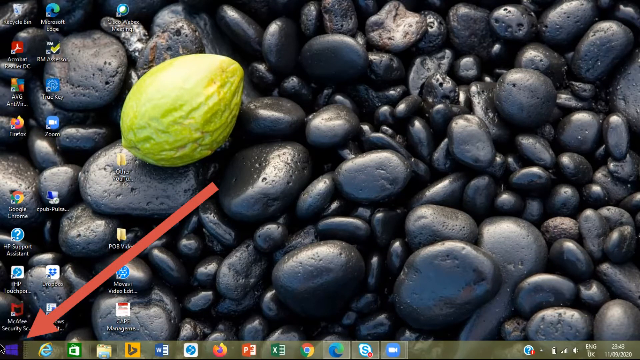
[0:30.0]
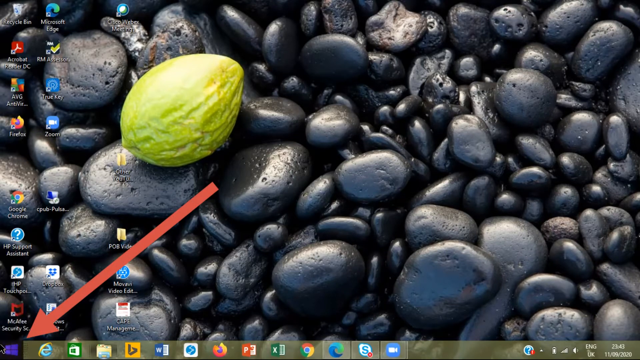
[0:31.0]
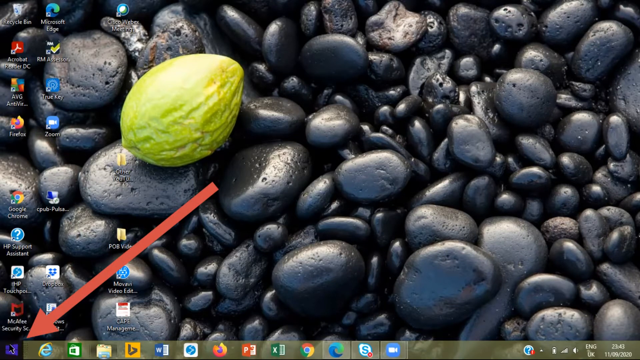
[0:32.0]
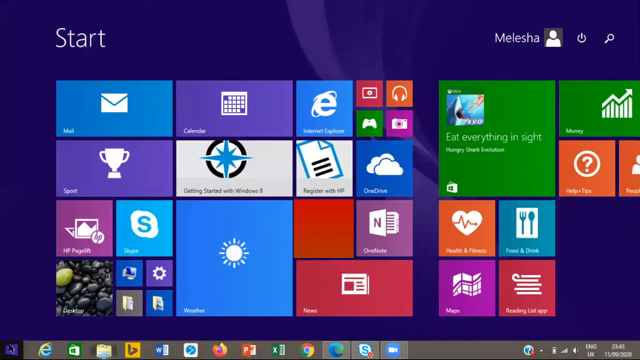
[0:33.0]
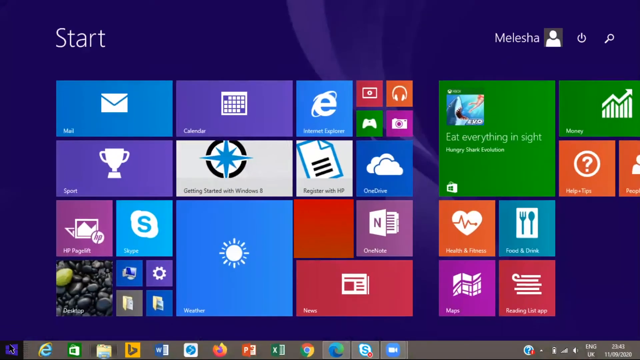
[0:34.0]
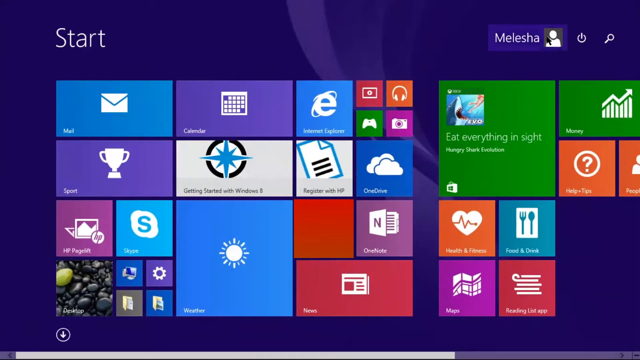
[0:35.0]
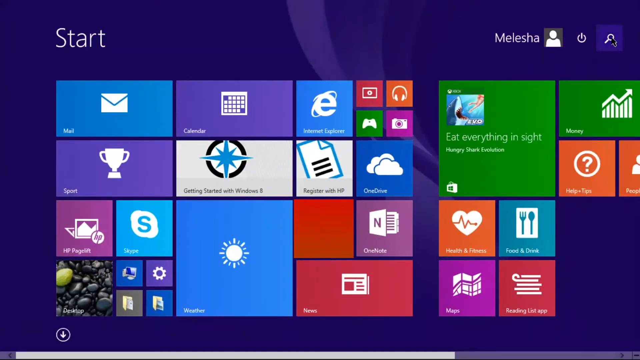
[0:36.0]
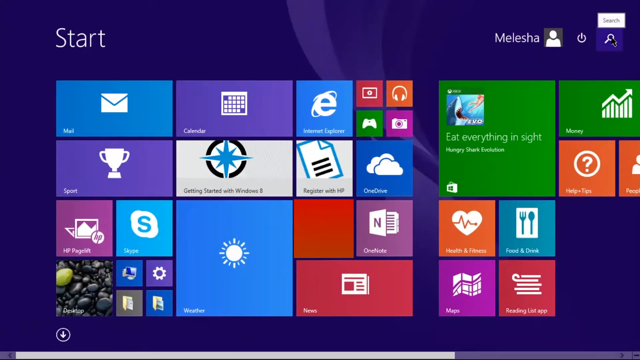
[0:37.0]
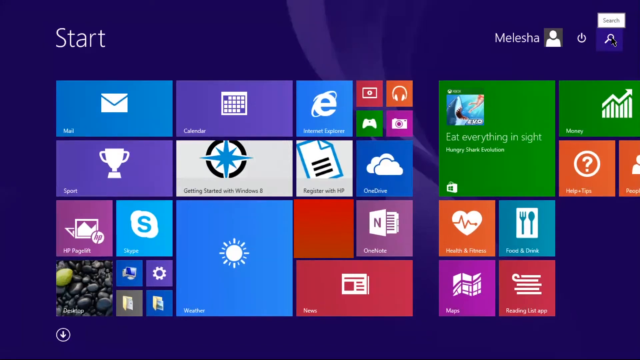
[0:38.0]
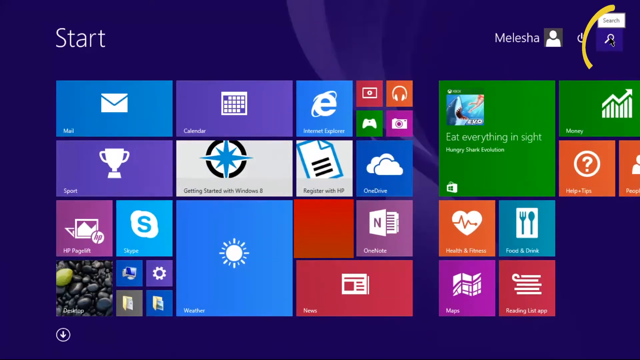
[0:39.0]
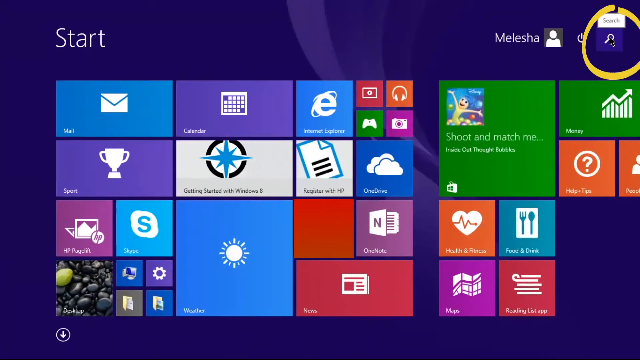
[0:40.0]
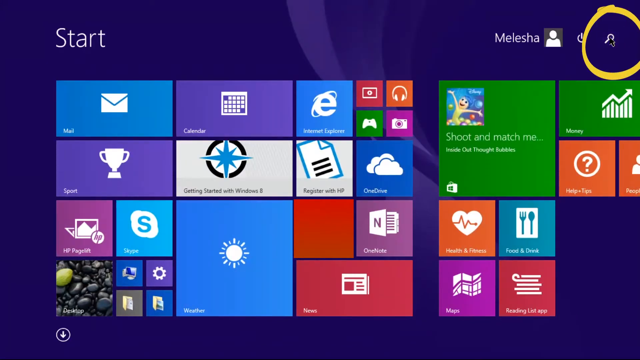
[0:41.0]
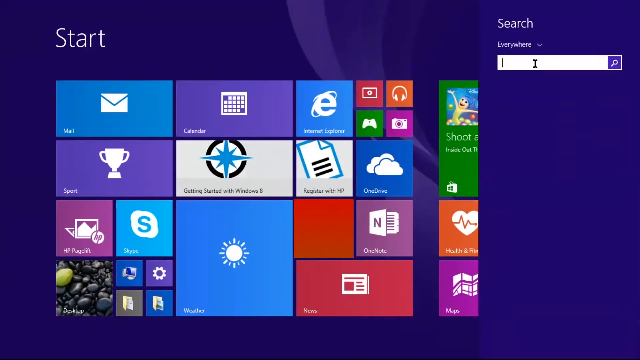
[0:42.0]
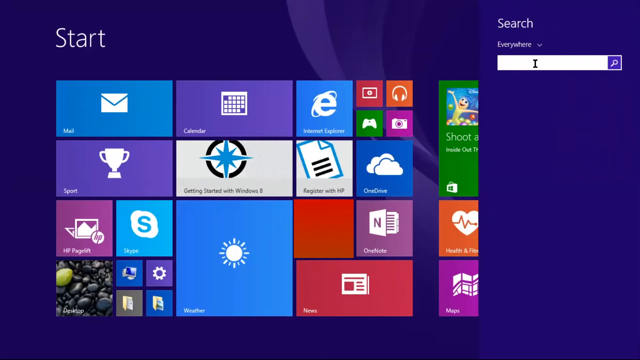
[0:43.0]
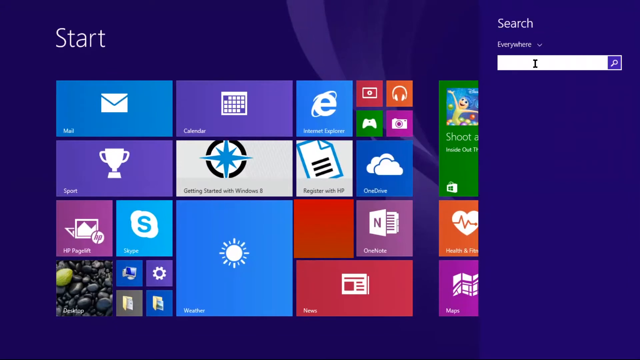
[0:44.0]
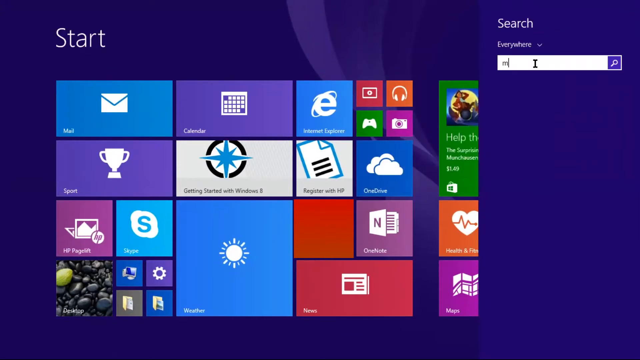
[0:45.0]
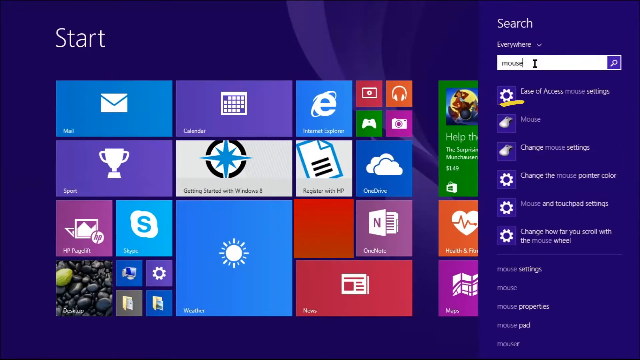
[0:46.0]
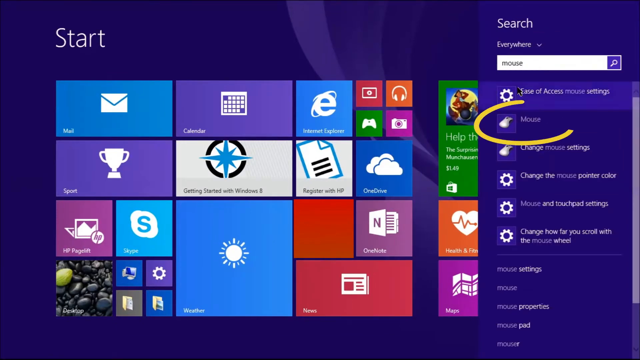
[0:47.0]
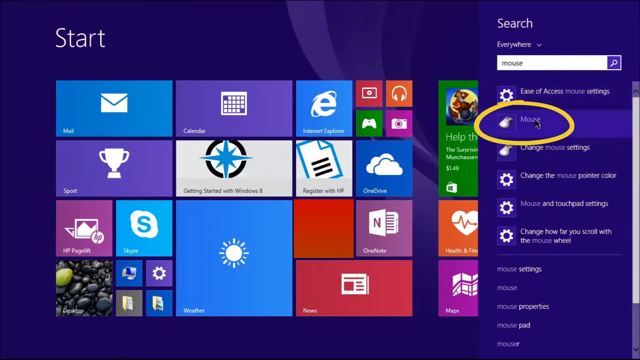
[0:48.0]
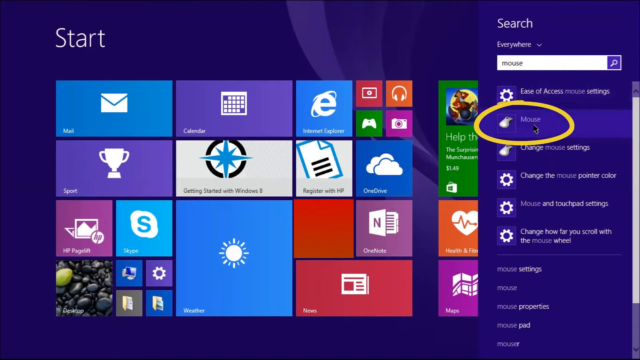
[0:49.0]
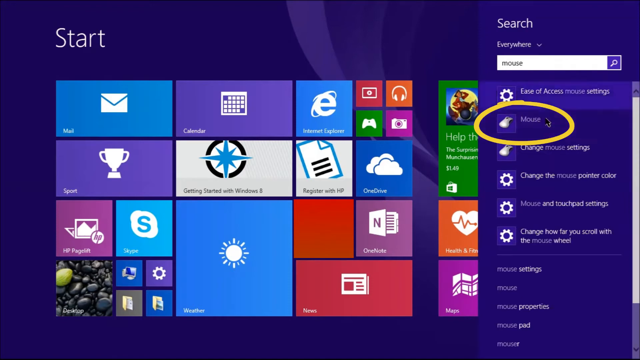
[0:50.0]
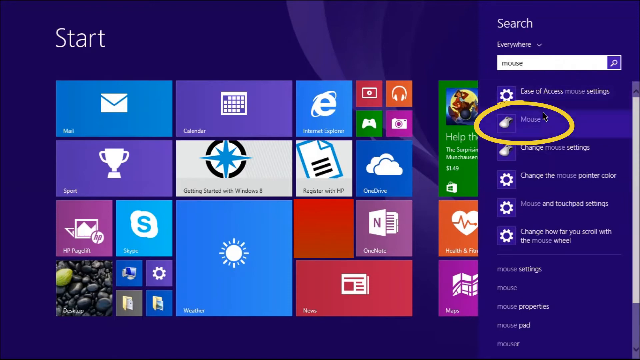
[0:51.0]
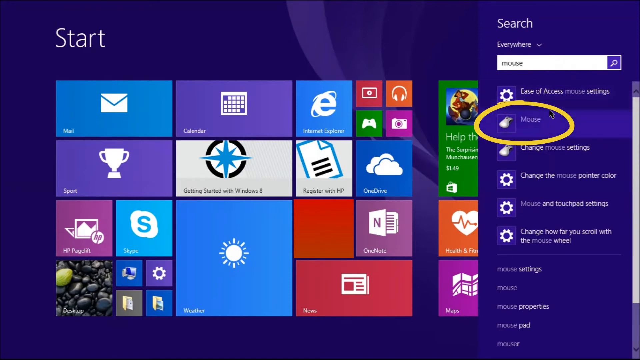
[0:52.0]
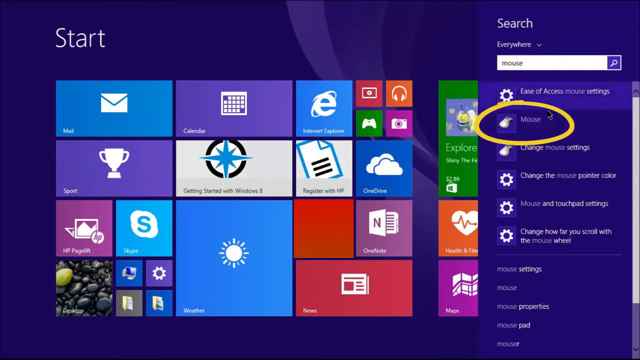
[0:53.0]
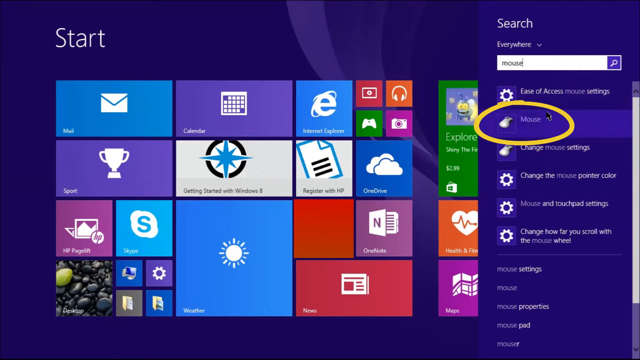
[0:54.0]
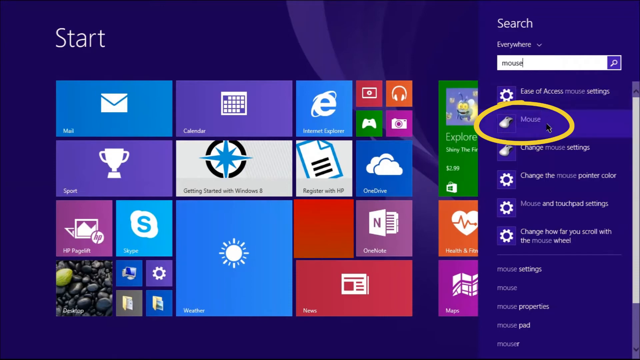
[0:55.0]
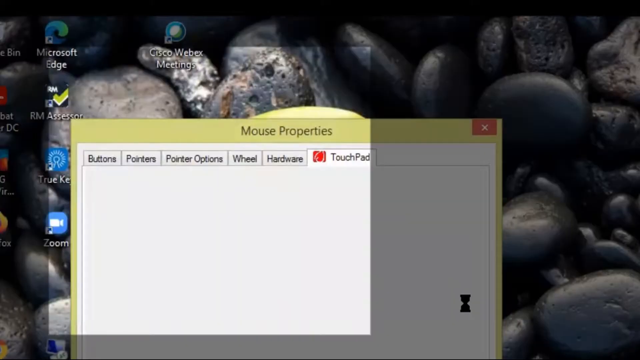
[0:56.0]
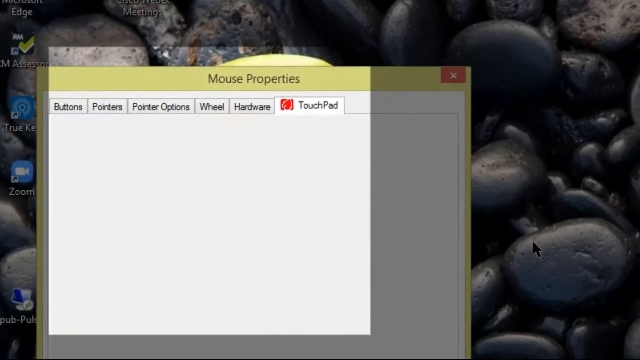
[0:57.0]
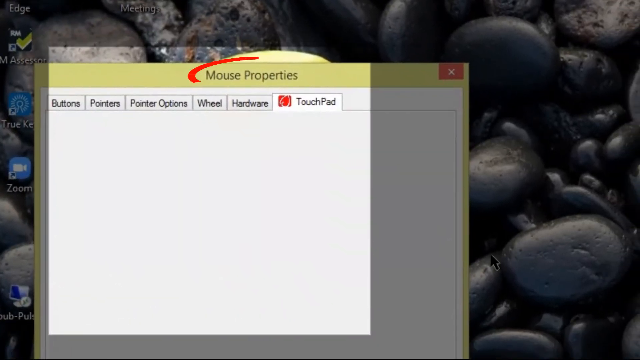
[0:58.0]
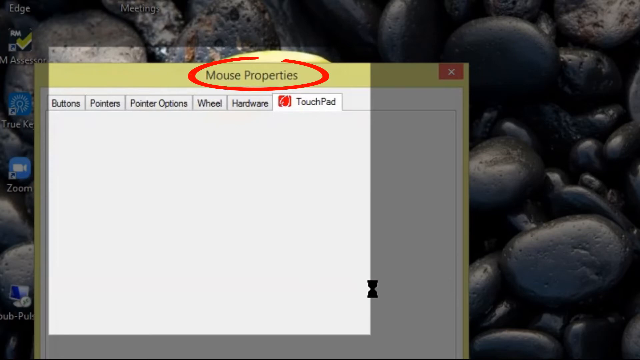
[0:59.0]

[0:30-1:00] The video appears to be a tutorial. A red arrow pops up, apparently indicating to click the Windows button in the bottom left corner. It is clicked, and a bunch of options pop up: the person's name, Malisha, at the top right, a power off button, a search button, and the different categories available on the computer. The person uses the mouse to hit the search button, and a yellow line is drawn over it to show where to go. A search bar pops up with a dropdown menu on which "everywhere" is selected. The person puts the mouse in the bar and types "mouse", and a couple of options pop up. A yellow line is drawn over the option for the mouse, and the cursor kind of jiggles back and forth to further highlight it. A pop-up showing mouse properties appears, and another red line is drawn around it.